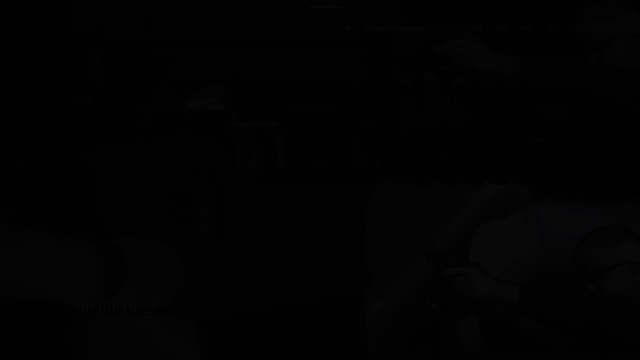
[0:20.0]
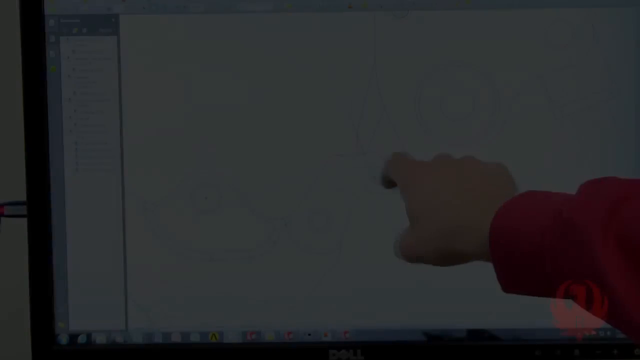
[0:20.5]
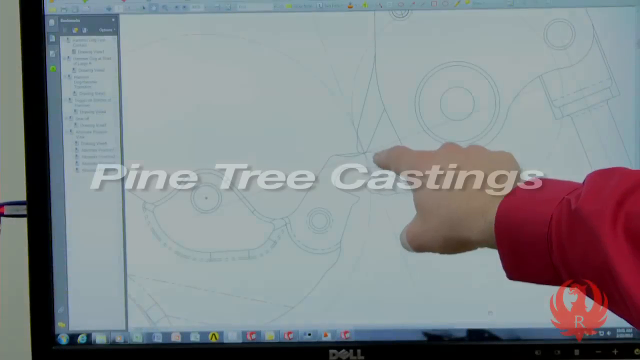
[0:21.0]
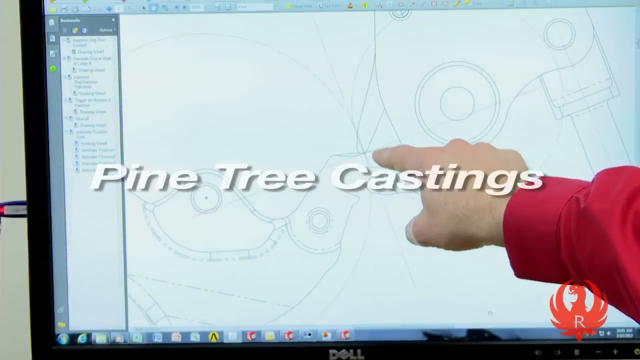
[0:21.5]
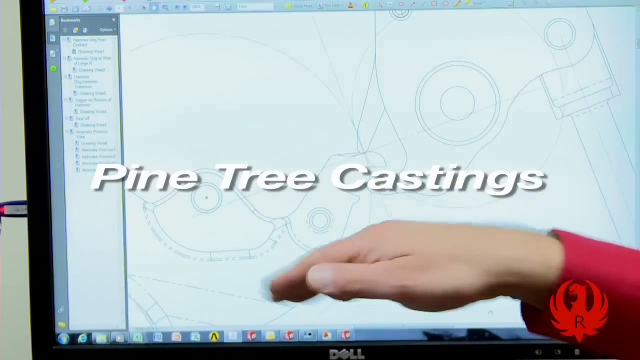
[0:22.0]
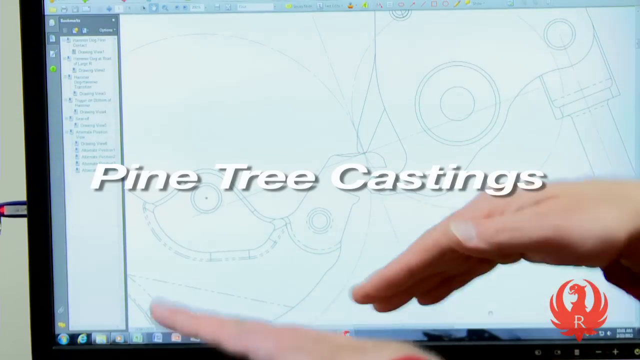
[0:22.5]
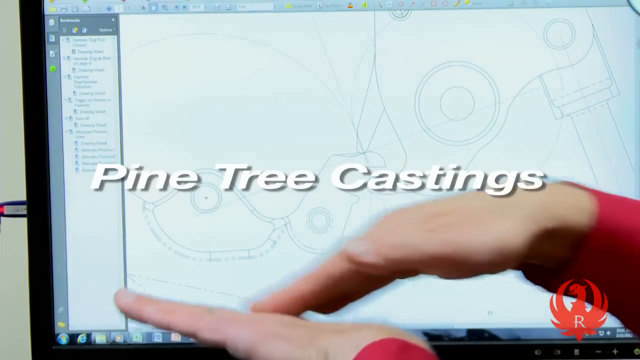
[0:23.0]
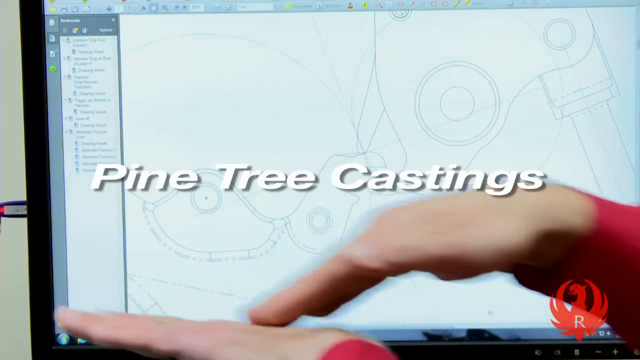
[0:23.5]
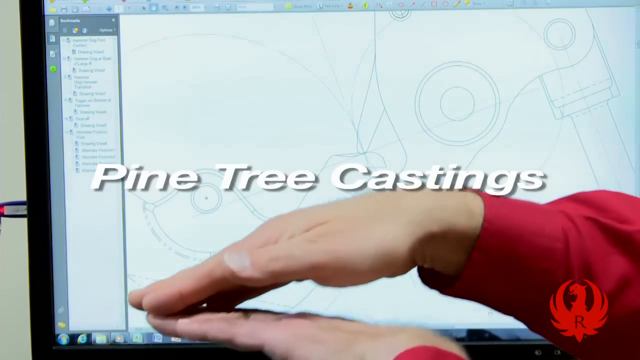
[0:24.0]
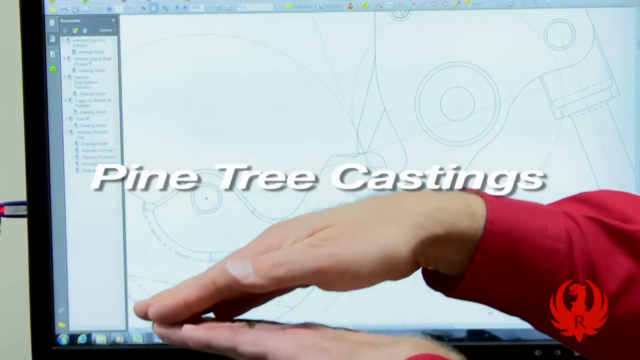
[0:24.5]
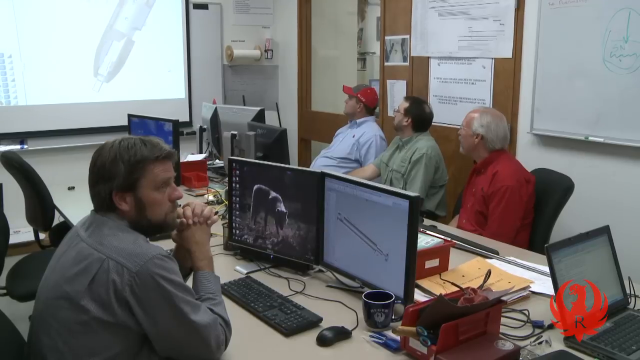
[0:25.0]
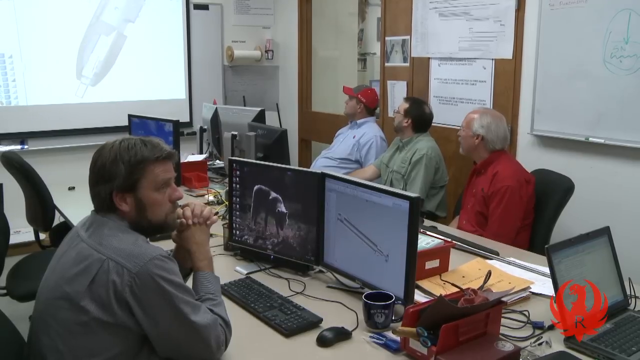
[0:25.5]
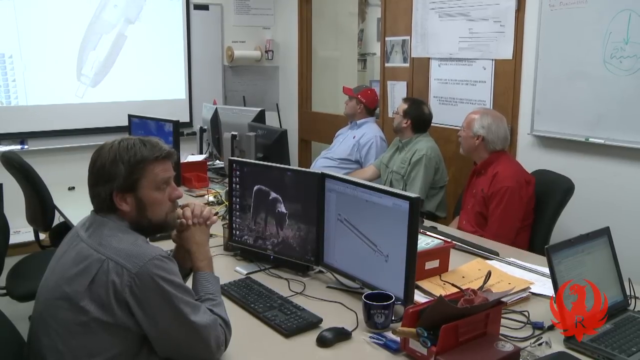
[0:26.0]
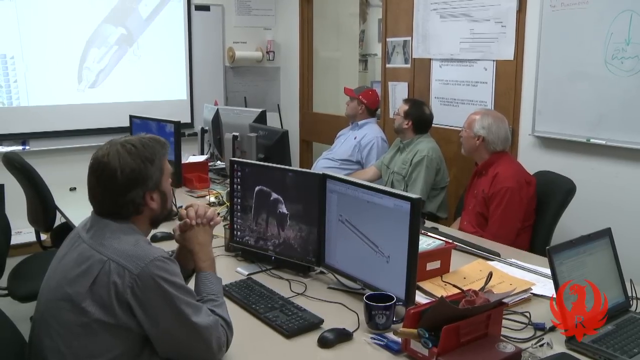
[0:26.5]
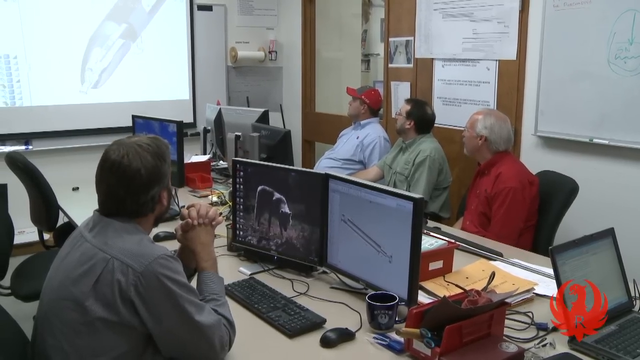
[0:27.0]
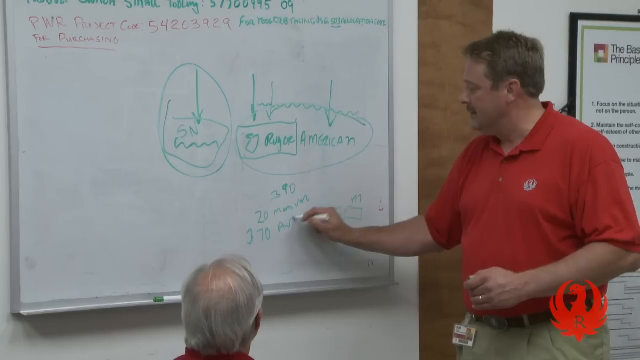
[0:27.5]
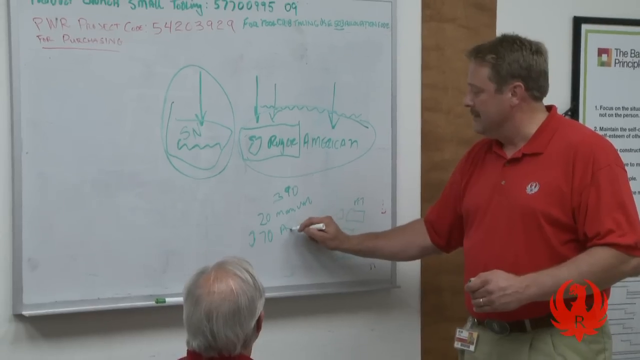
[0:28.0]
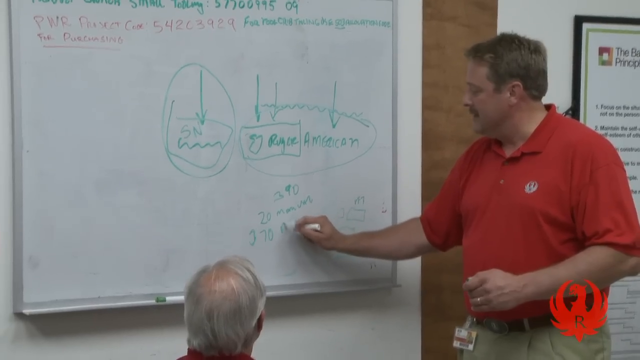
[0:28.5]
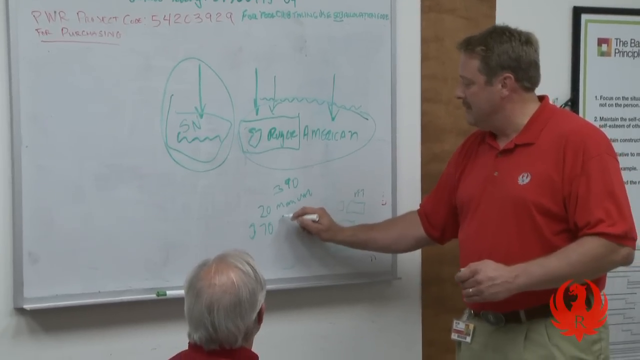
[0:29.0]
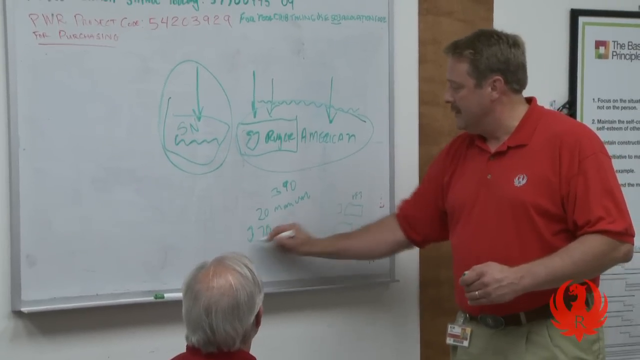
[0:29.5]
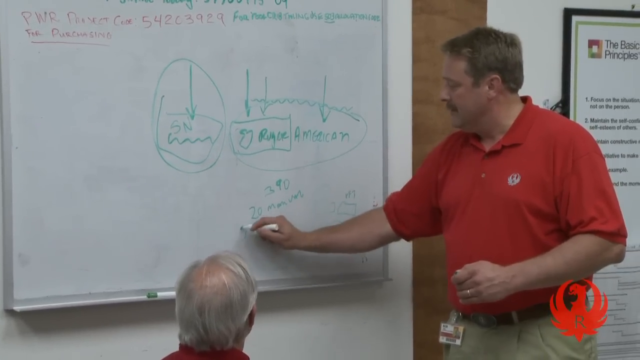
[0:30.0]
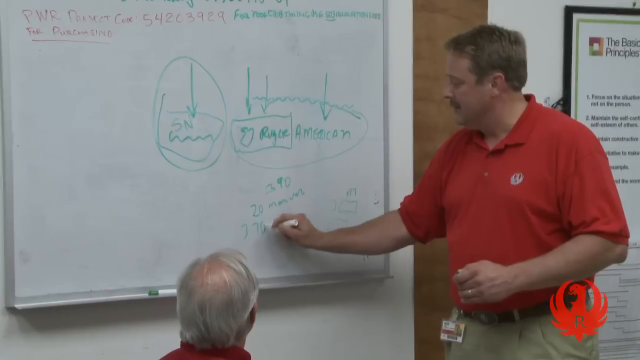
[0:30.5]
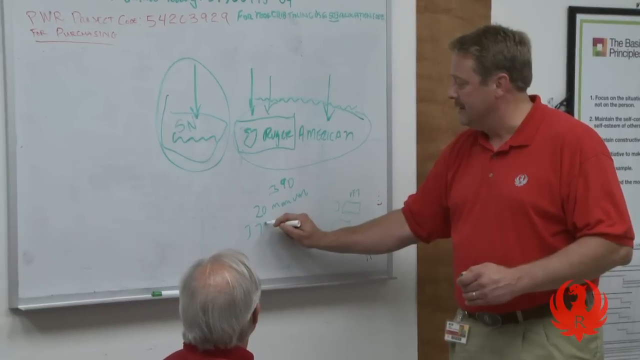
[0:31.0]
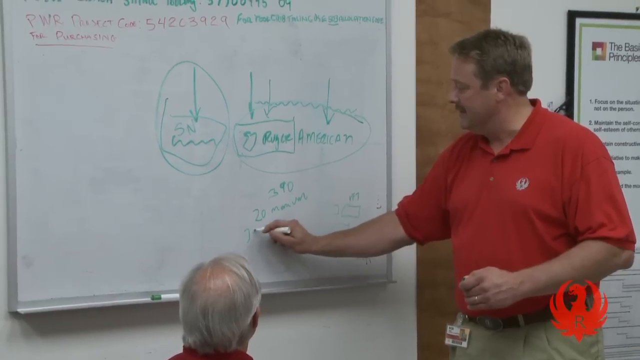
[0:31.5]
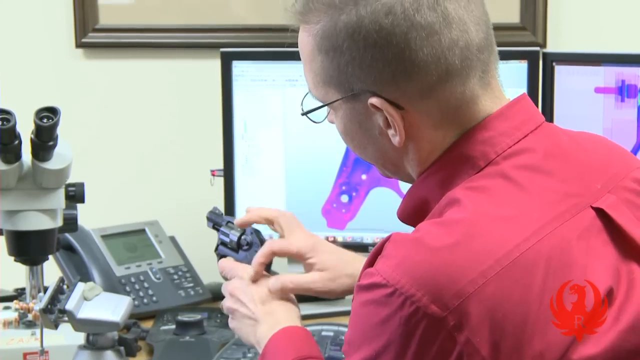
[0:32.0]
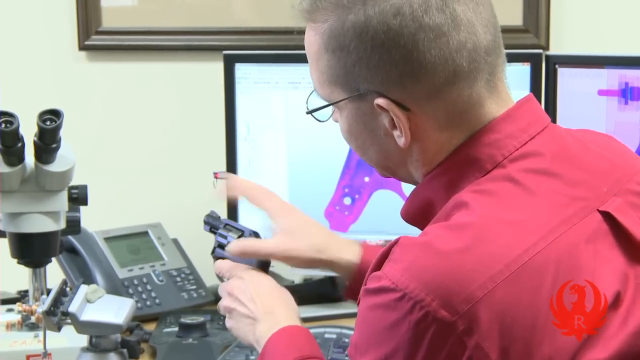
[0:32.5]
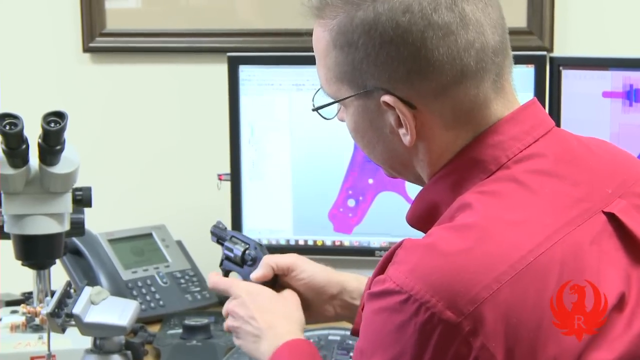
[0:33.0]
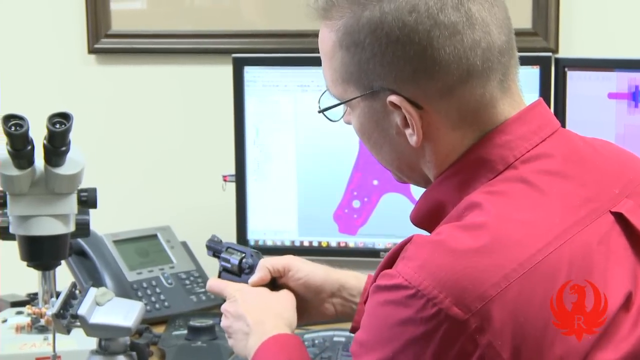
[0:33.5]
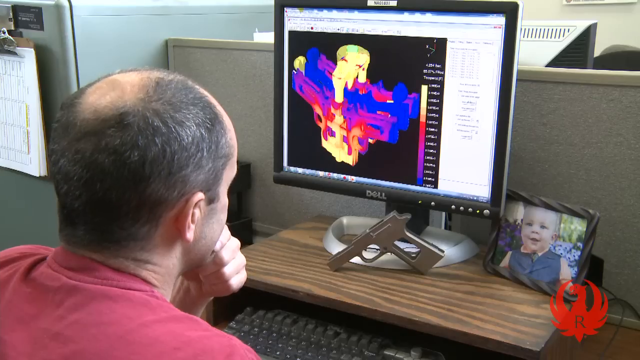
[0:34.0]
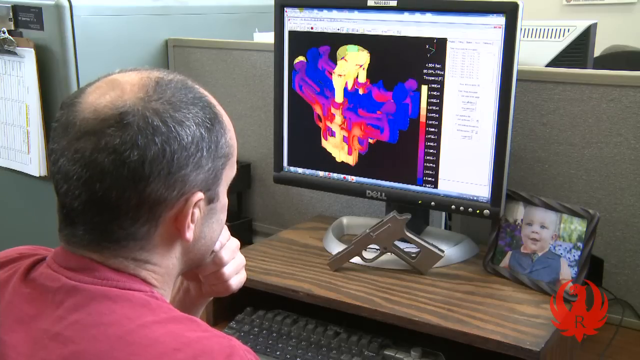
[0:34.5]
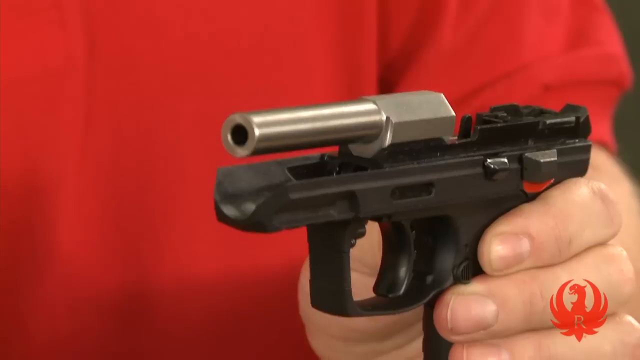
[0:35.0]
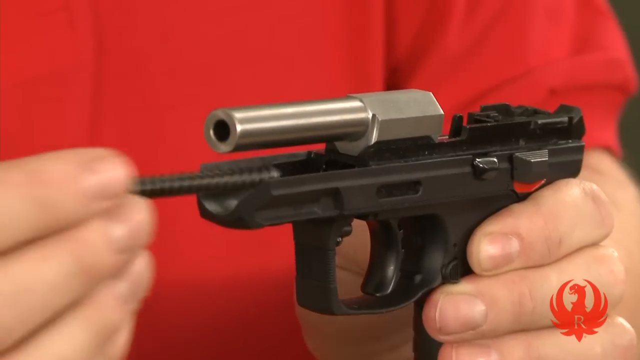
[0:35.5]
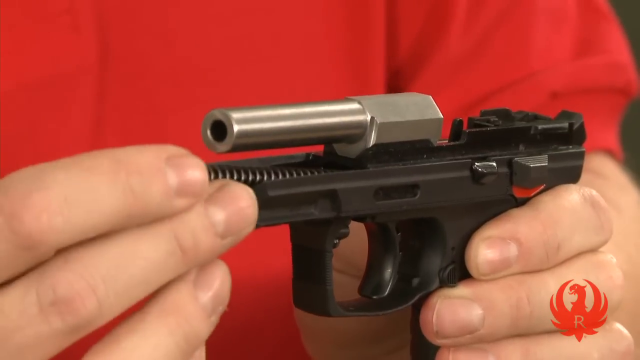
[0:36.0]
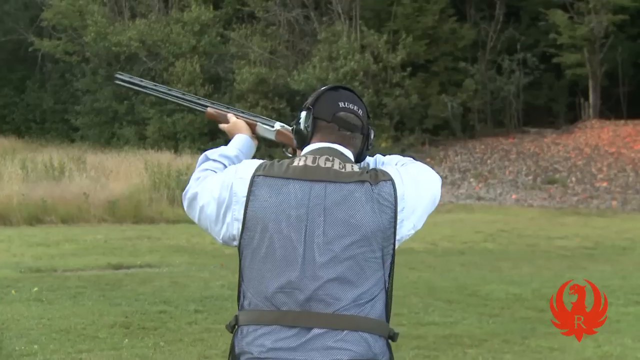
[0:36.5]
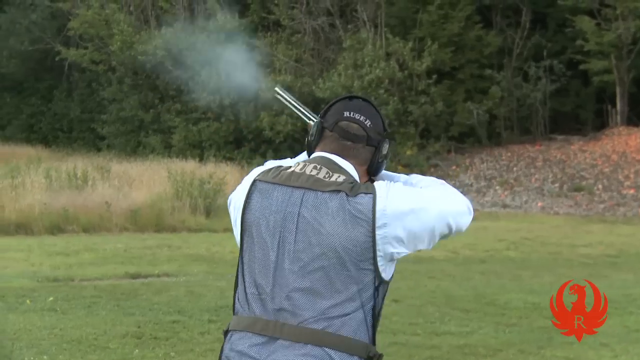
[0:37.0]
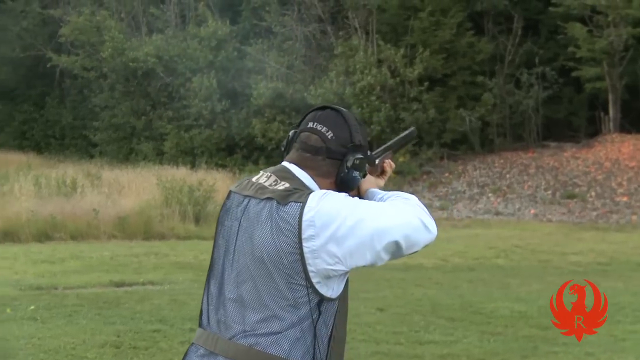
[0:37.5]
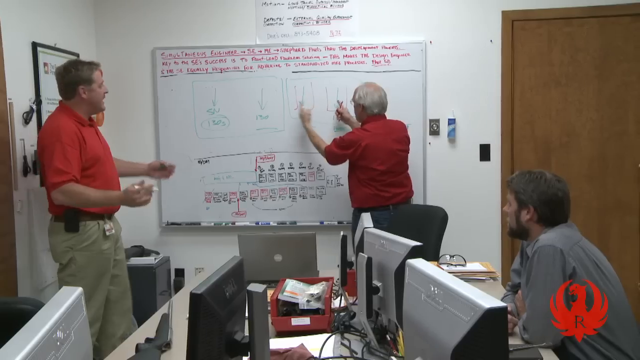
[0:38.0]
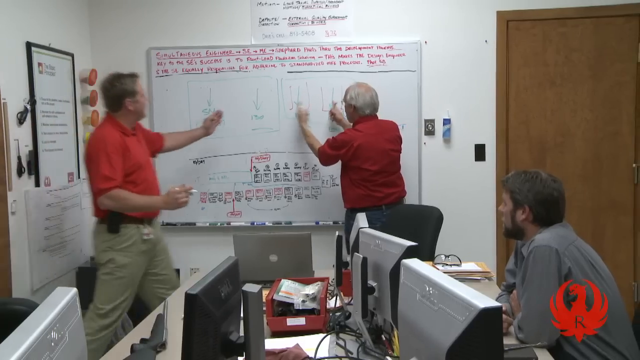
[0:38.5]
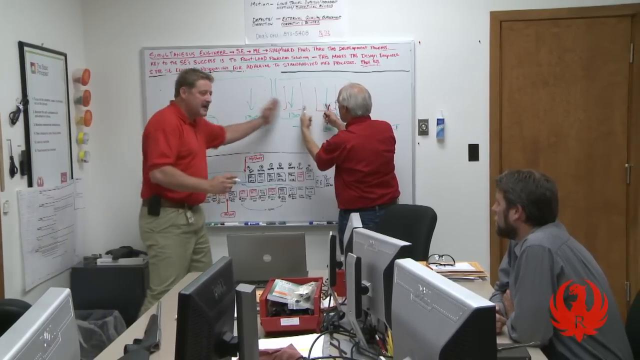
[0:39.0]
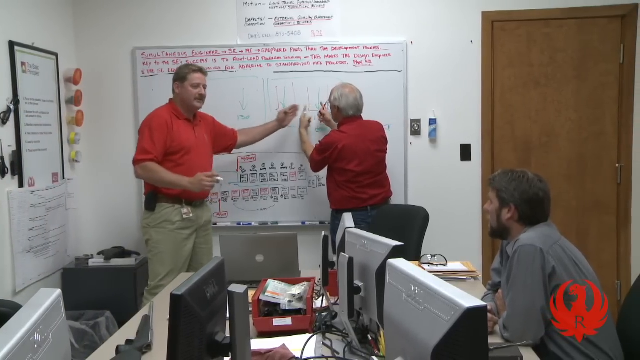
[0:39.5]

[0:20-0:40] This segment appears to be about Pine Tree Castings. A man writes on a whiteboard, then a man holds a gun, and another man seems to be building a gun. Two more men talk in front of a whiteboard, men sit around a table, a gentleman explains a pistol, and a man shoots a rifle. The Ruger Company insignia appears in the bottom right-hand corner of the video.